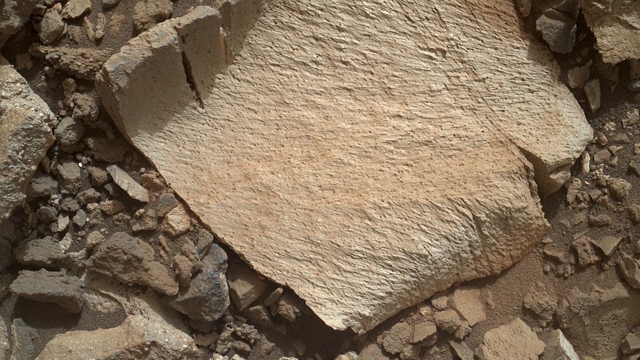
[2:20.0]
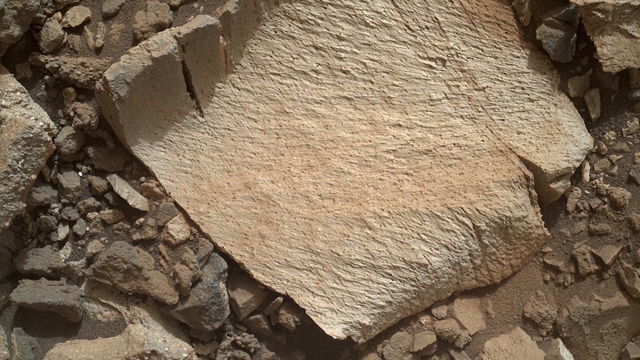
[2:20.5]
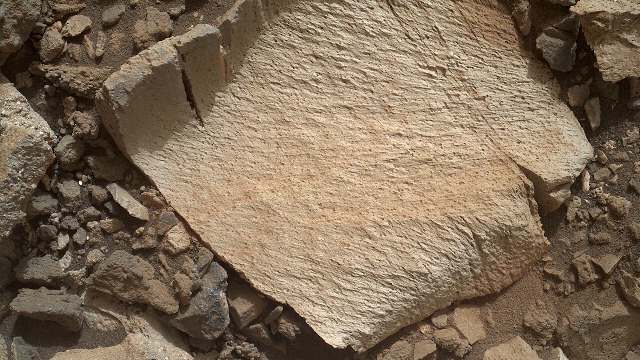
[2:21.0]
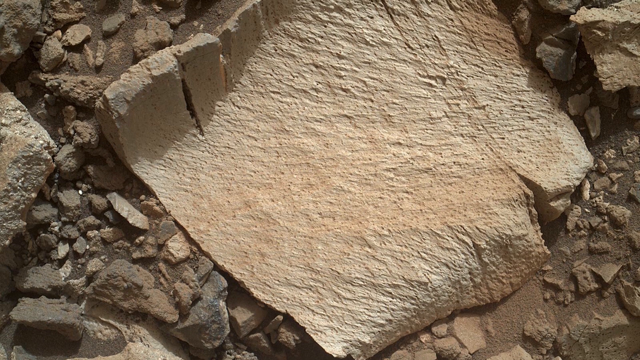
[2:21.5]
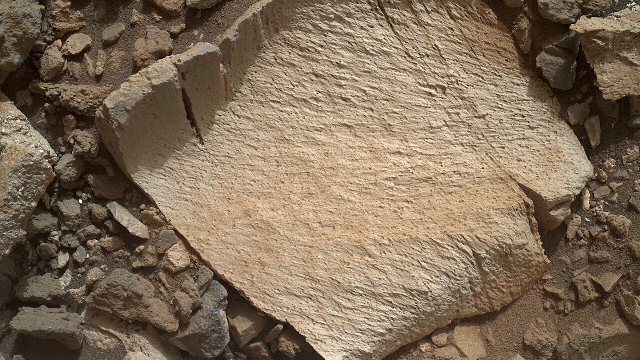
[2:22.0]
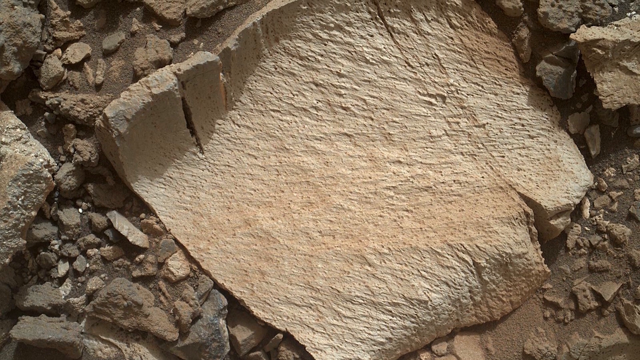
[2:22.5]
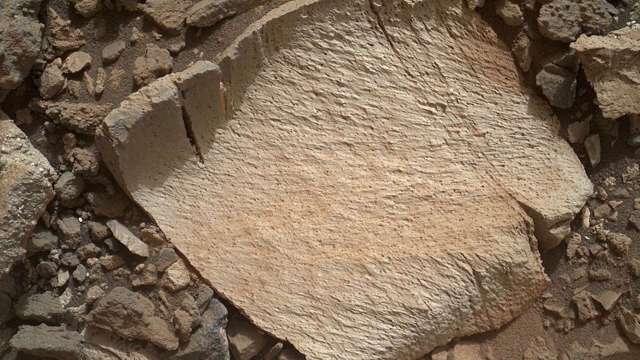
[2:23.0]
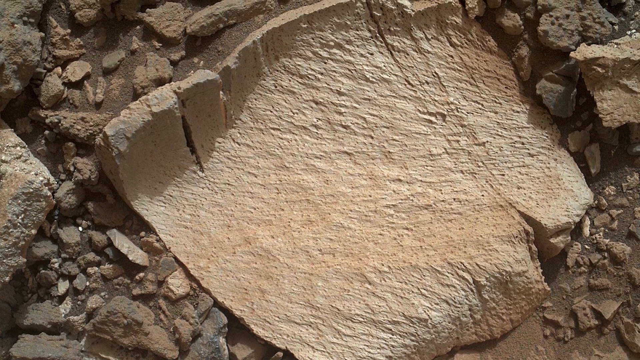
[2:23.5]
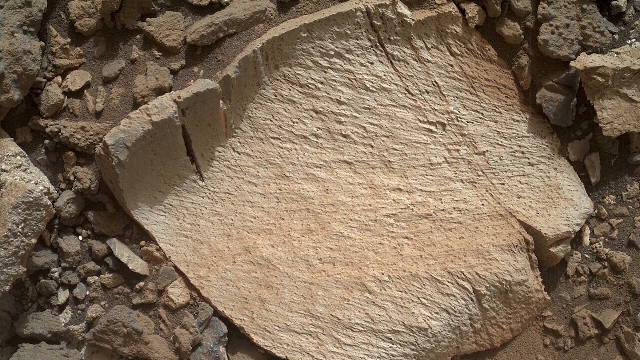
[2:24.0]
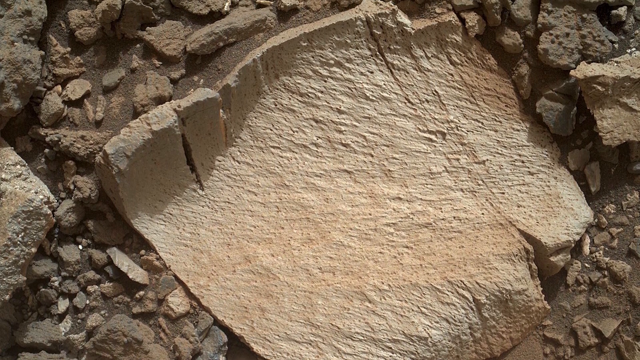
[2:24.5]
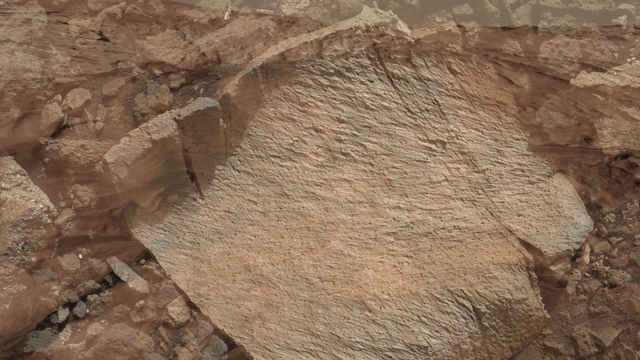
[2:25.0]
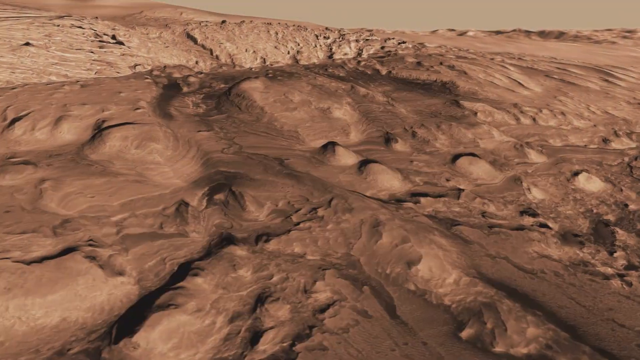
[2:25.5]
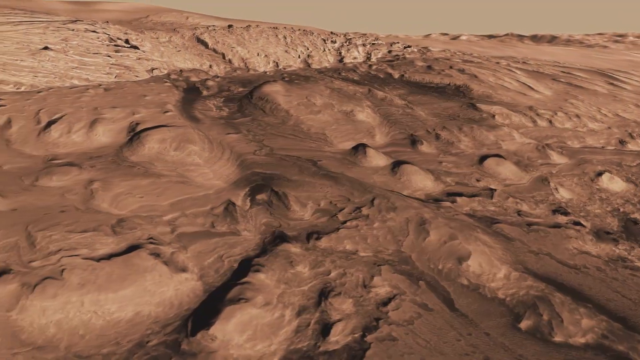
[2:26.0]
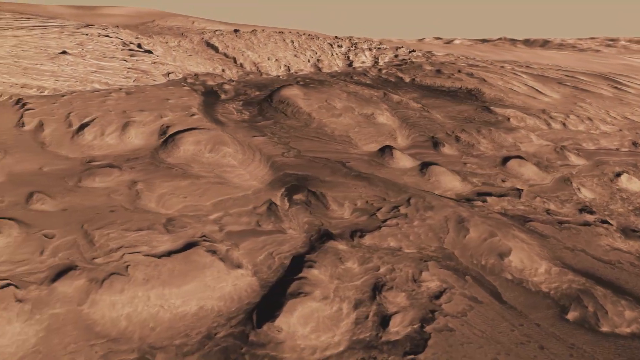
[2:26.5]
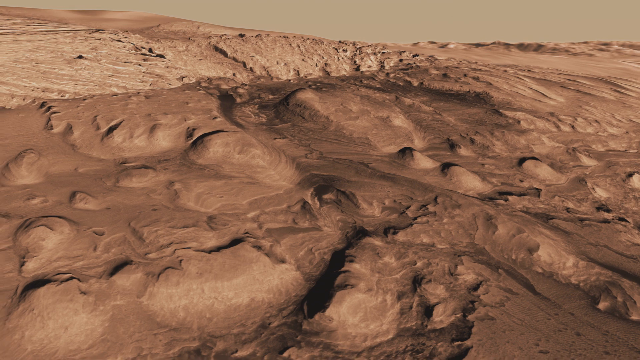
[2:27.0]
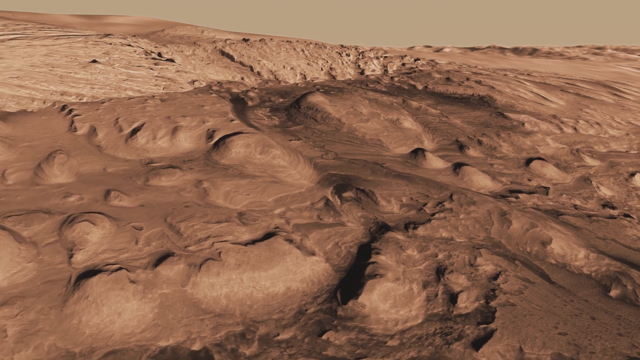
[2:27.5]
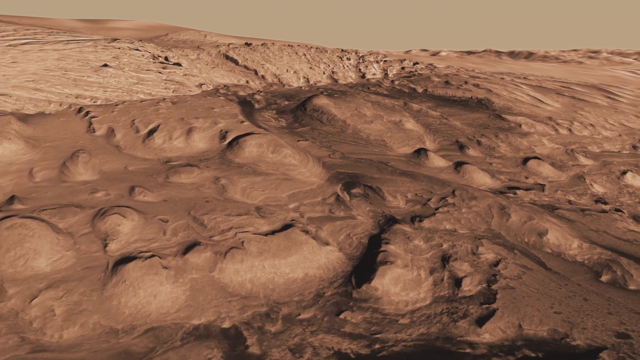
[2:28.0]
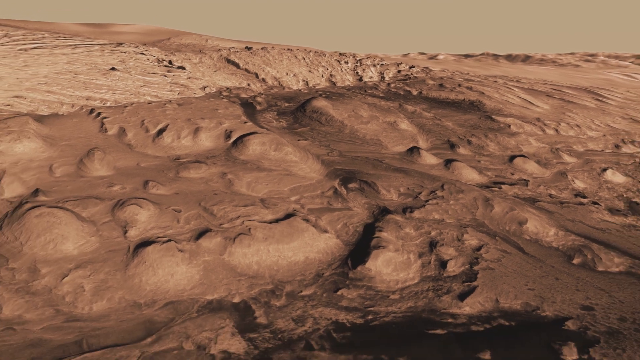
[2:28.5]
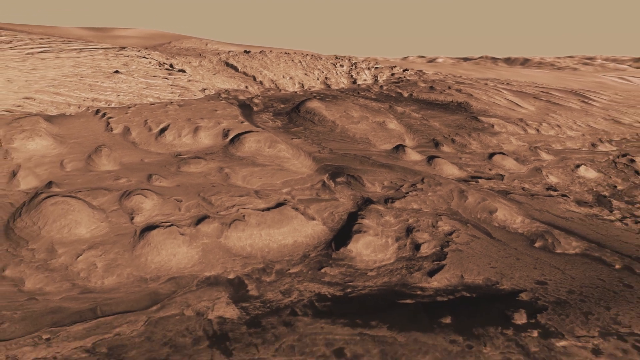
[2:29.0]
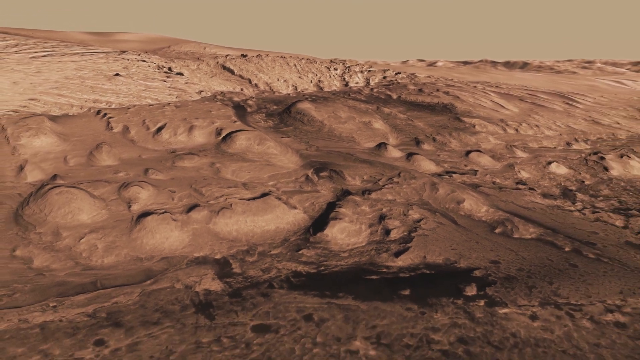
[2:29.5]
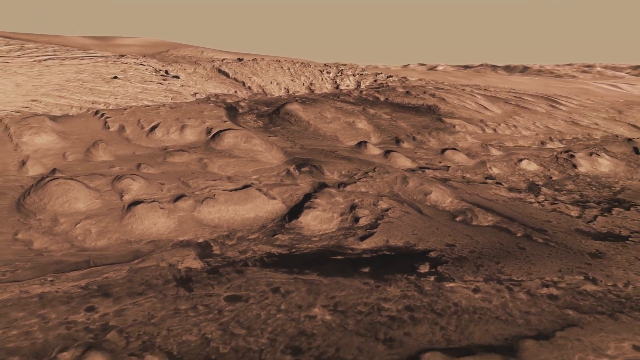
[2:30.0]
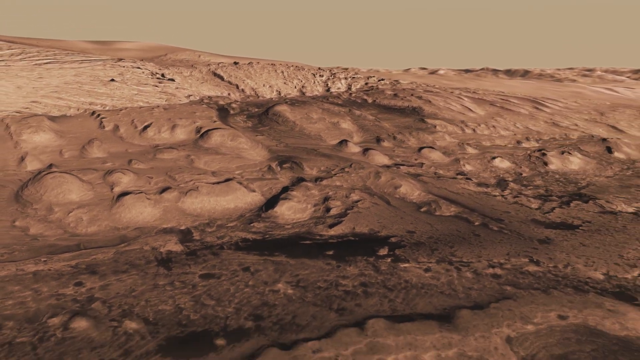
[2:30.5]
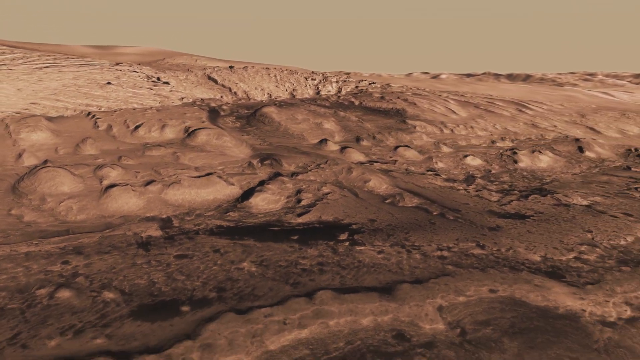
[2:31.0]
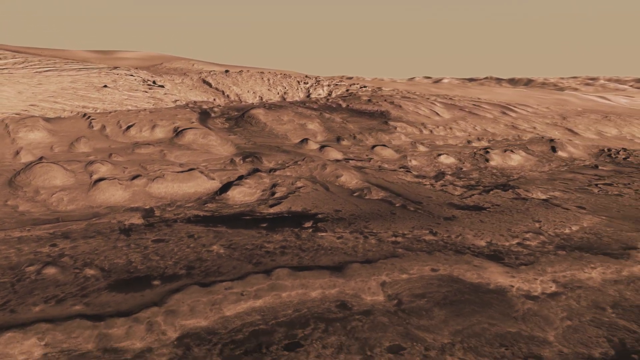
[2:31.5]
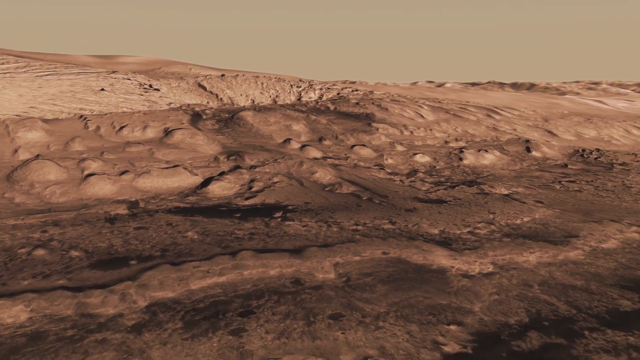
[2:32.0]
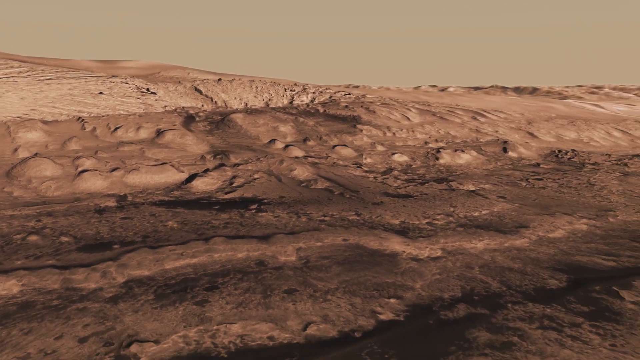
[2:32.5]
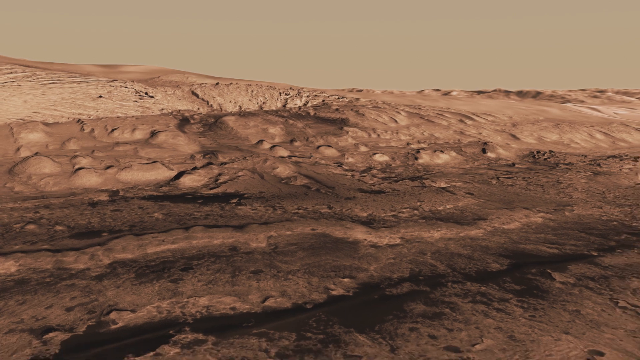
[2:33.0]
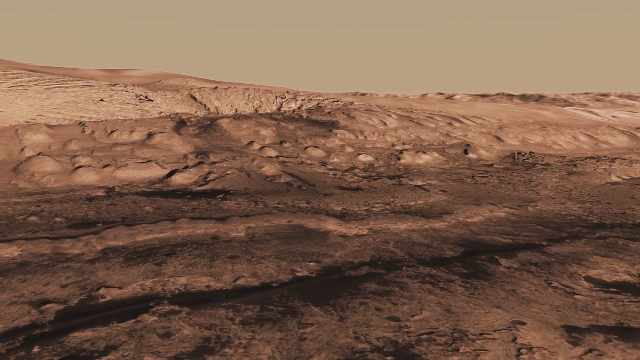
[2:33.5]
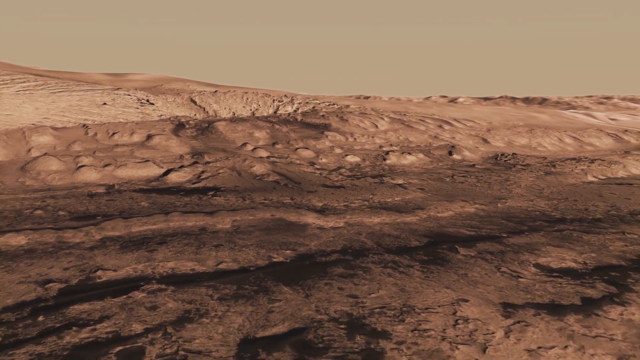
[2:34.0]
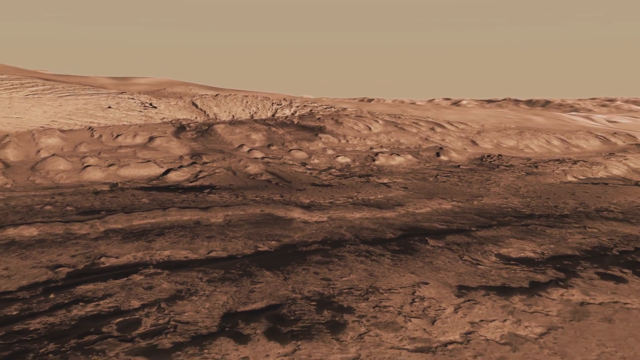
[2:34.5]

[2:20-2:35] The close-up photograph taken by the rover of the curving, flat rock continues. The rock is light brown, appears sandy, has definite texture and appears to have a couple of cracks toward the top; it is surrounded by other, smaller rocks. A 3D map of the crater follows: it is bumpy, red and sandy in appearance, appears mountainous at the top and has many divots. As the camera pans out, a broader view of the landscape is visible. In the background the sky is kind of a light brown tan color and appears overcast, likely because it is very dusty, so little of the sky or clouds can be seen.